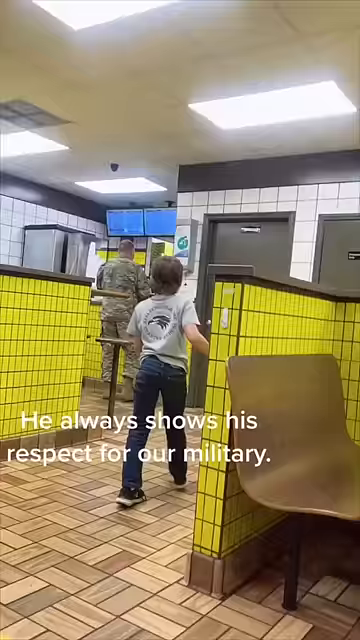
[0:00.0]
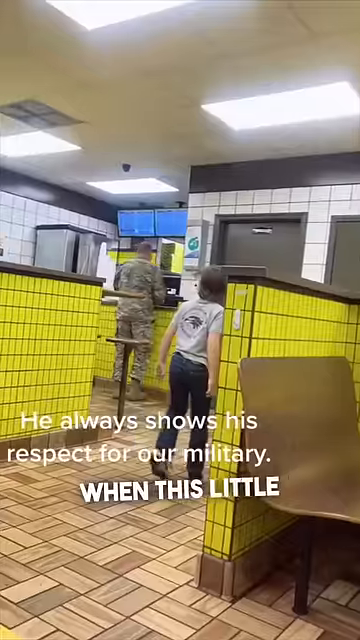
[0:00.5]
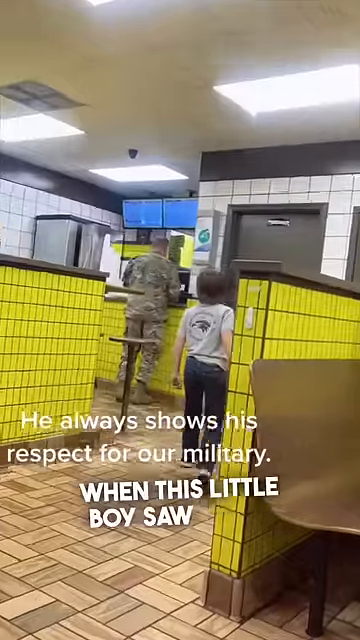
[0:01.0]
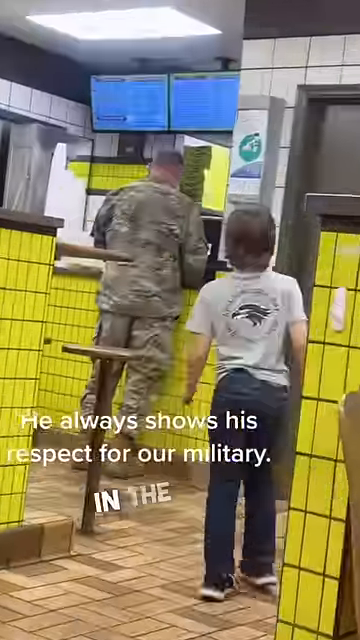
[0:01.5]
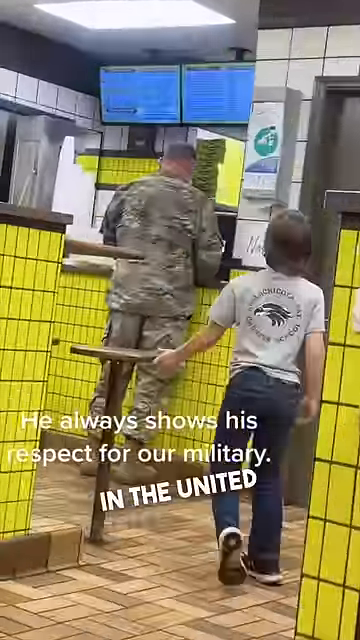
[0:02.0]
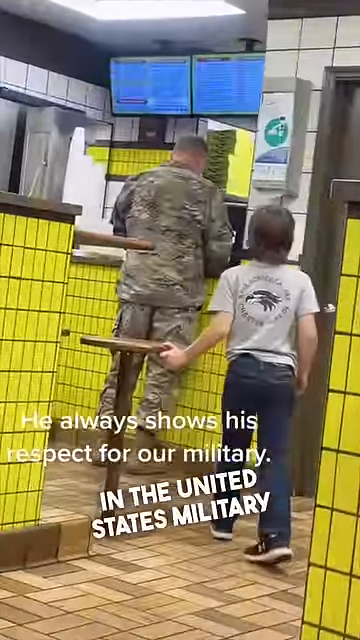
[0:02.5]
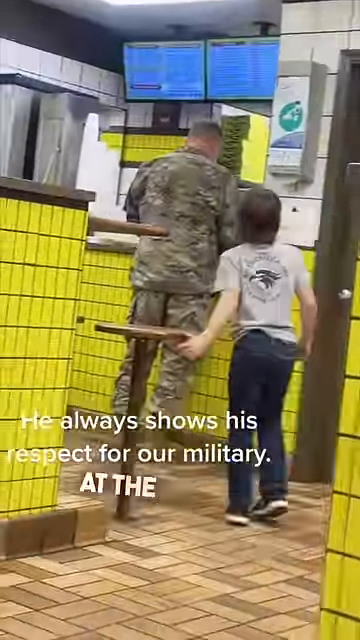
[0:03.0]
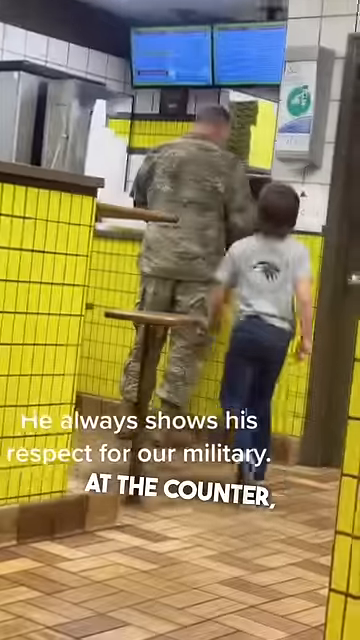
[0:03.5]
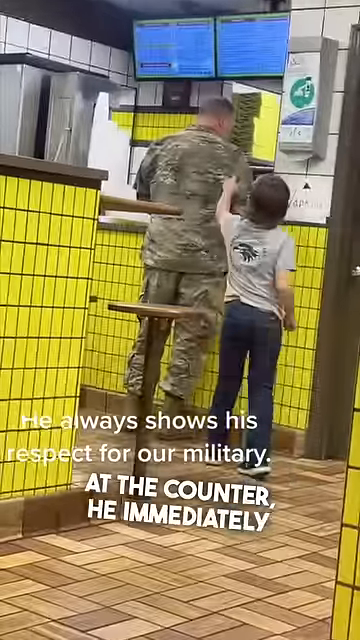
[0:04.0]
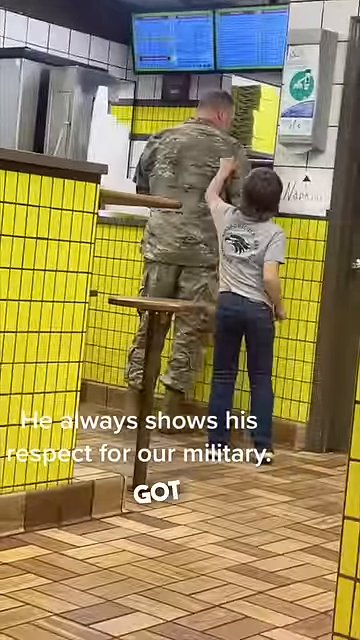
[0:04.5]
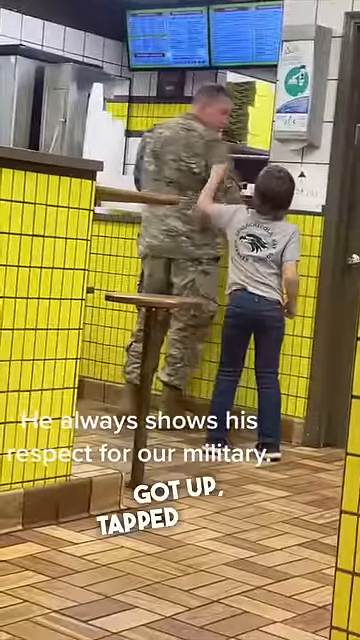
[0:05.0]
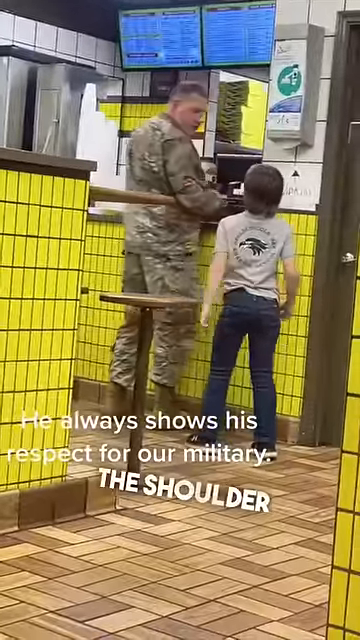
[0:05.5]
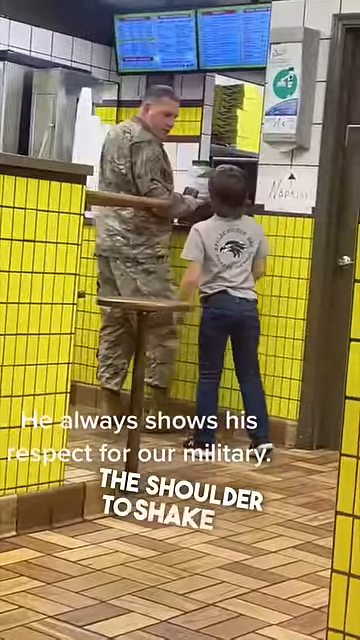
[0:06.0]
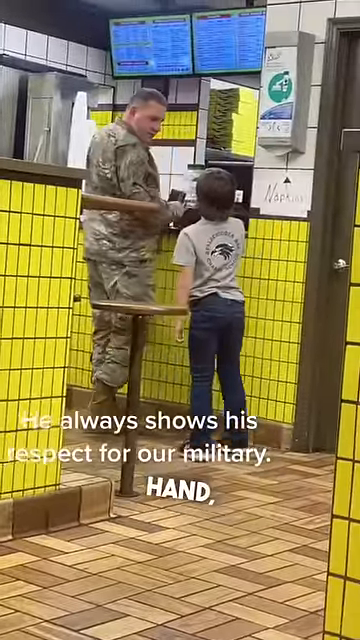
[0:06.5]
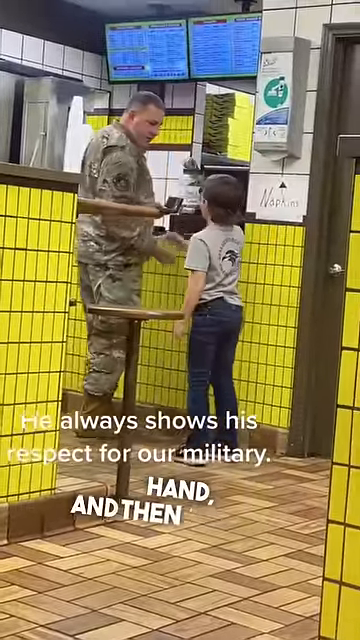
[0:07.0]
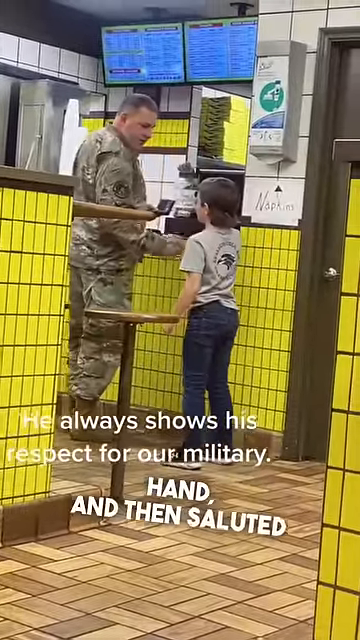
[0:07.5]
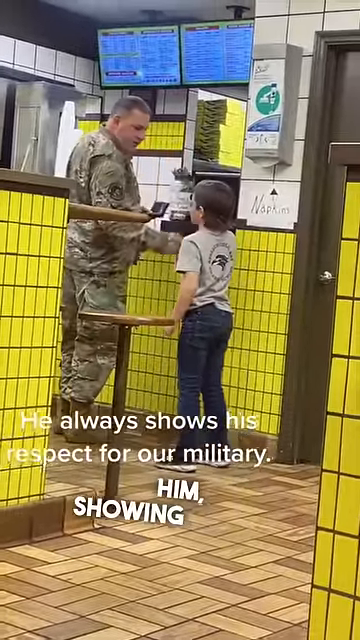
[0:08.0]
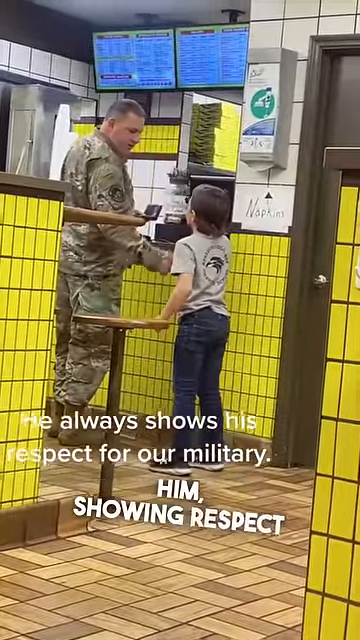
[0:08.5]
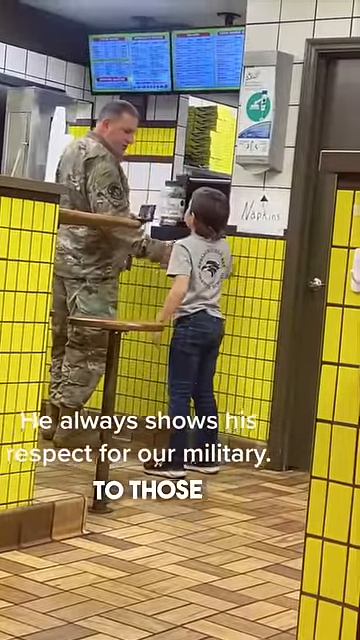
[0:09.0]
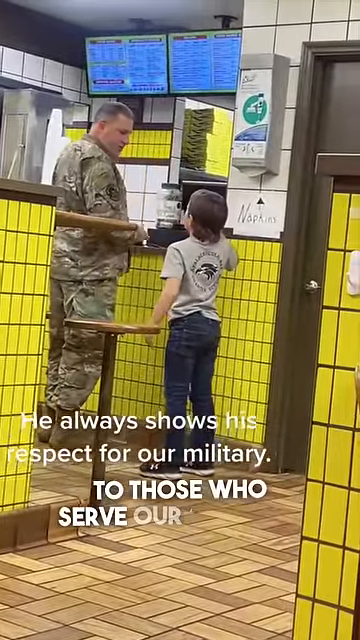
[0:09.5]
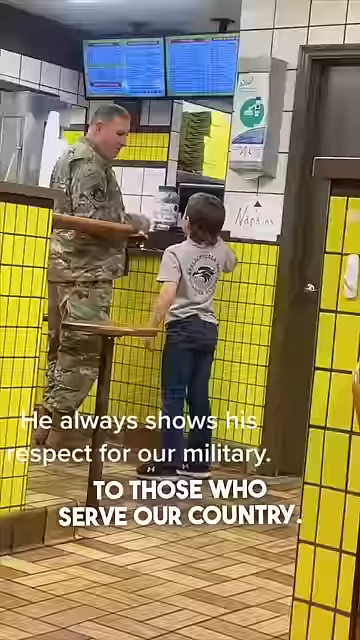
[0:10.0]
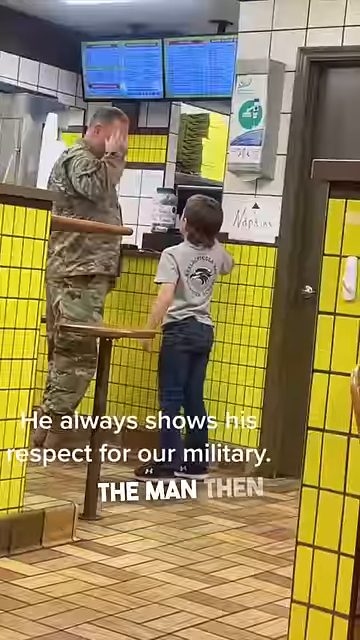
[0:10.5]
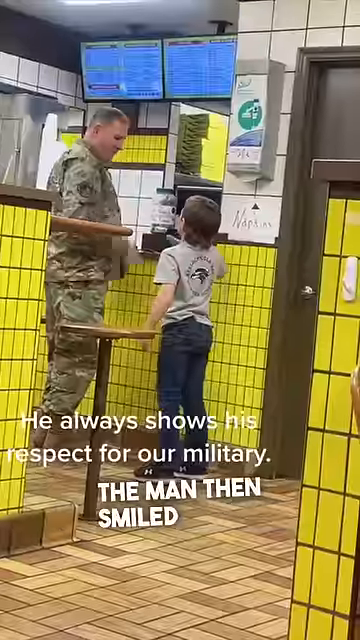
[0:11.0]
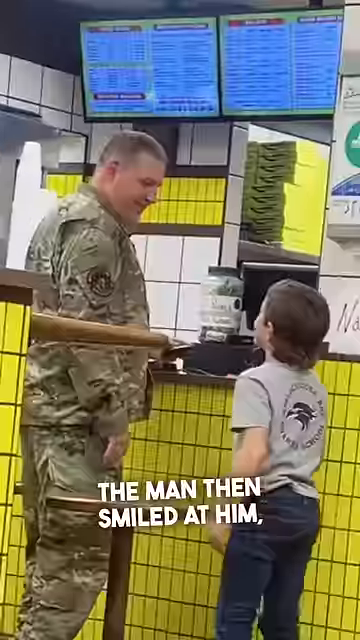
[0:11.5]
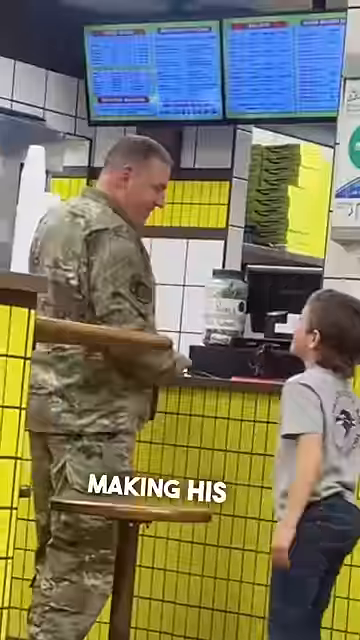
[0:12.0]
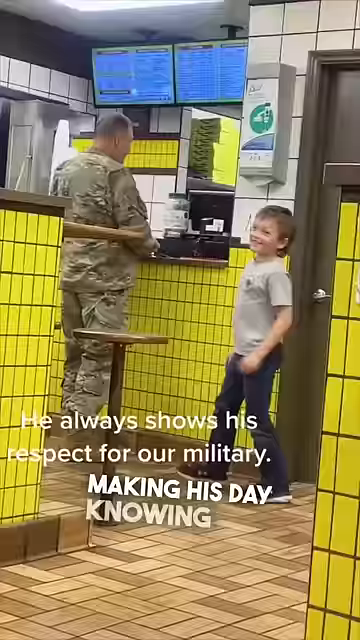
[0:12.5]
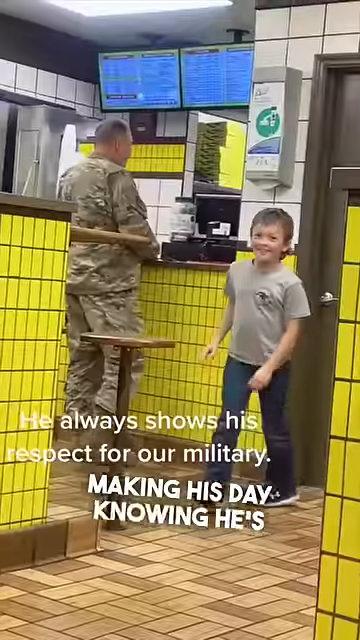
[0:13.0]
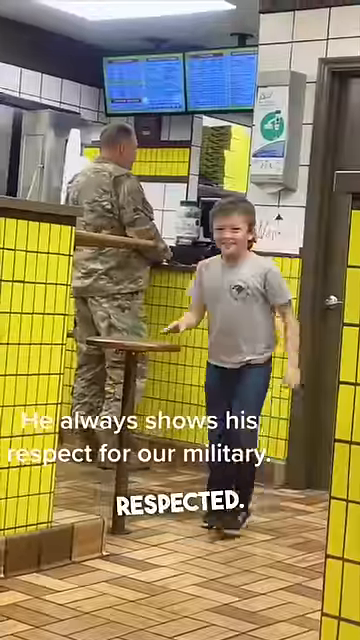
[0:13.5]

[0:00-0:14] This YouTube short is shot by the parent of a little boy. Text on the screen says "this little boy wanted to show his respect." The setting is a fast food restaurant with what look like yellow tile wall dividers and brown wooden bench seats. In the background, in the distance, a man in a camouflage military uniform is seen from the back, standing at the checkout counter as the cashier gives his order. The little boy, in blue jeans and a gray shirt, is seen from behind walking up to the man. White text overlaid on the video says "he always shows his respect for our military," and then "when this little boy saw a man in the United States military at the counter he immediately got up, tapped him on the shoulder to shake his hand and then saluted him showing respect." The boy taps the soldier on the shoulder, gets his attention, shakes his hand, and then salutes him, and the white soldier salutes back. They turn and separate, and the boy smiles as he walks back toward the camera.